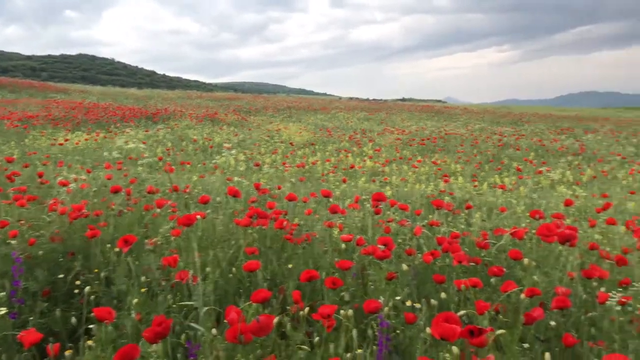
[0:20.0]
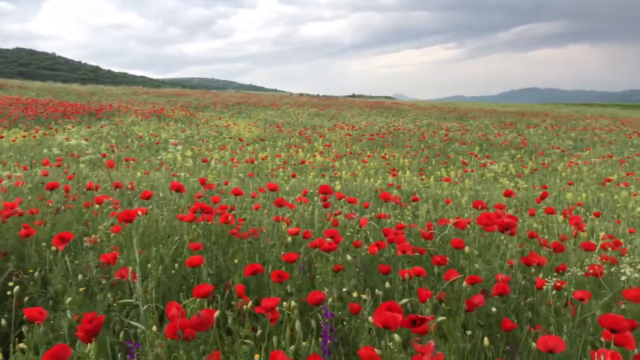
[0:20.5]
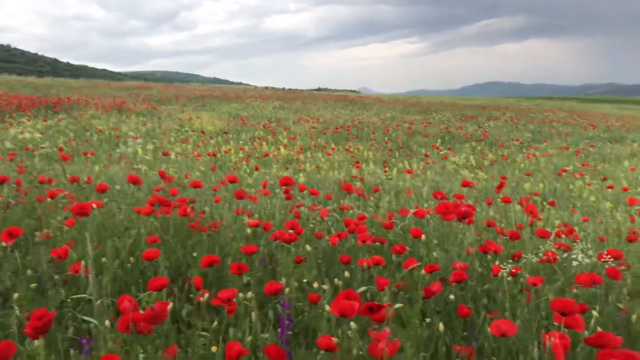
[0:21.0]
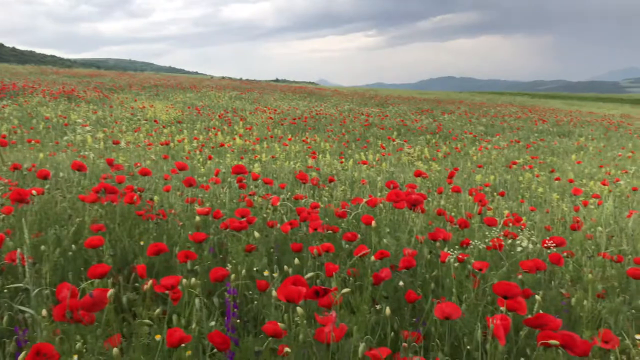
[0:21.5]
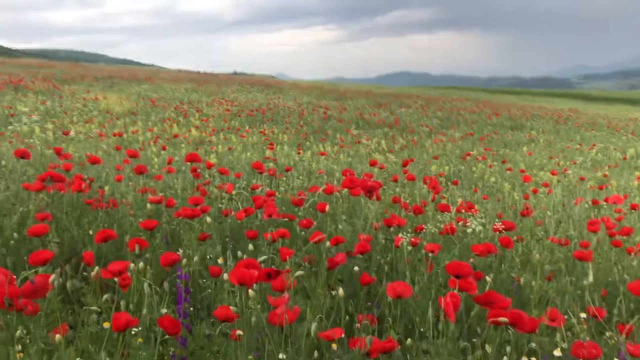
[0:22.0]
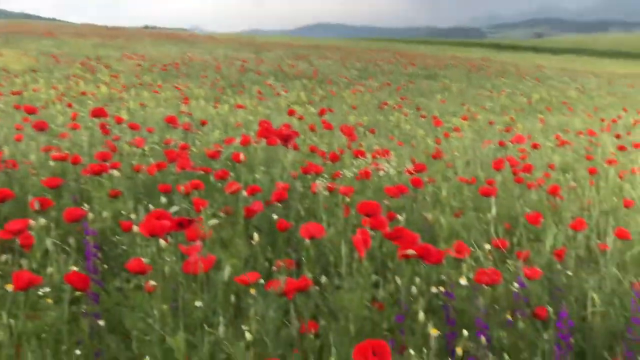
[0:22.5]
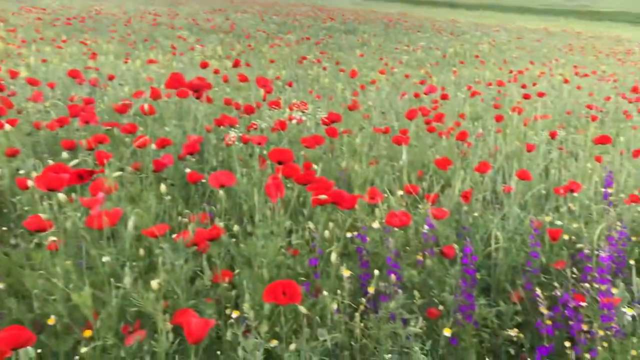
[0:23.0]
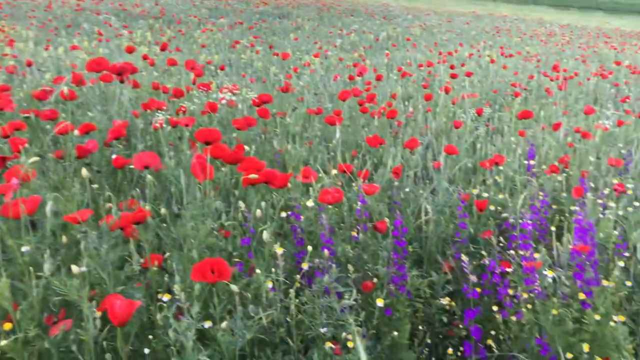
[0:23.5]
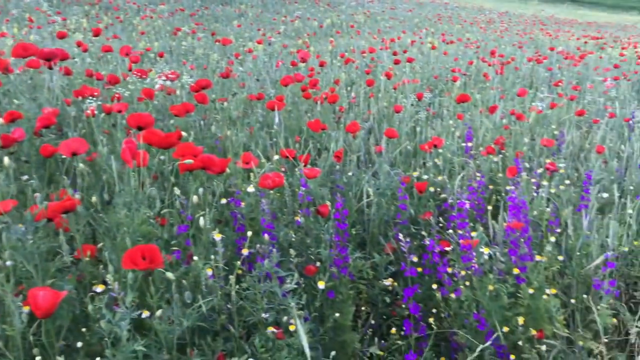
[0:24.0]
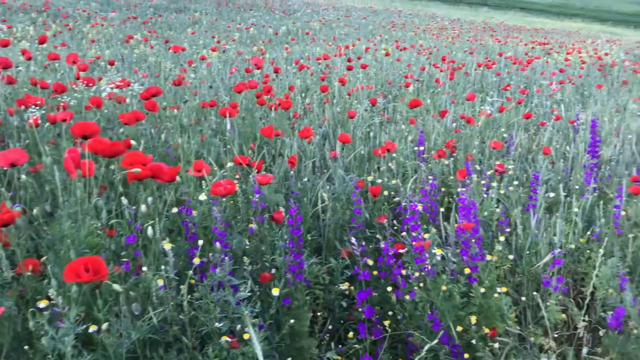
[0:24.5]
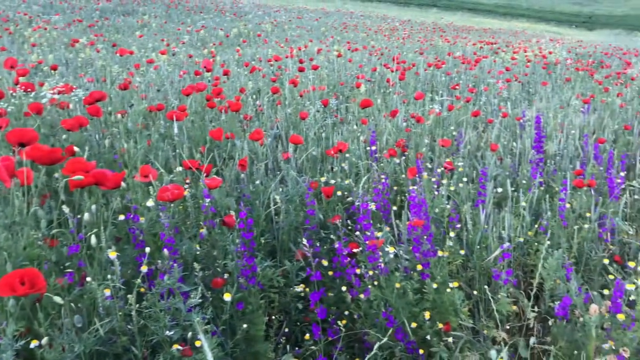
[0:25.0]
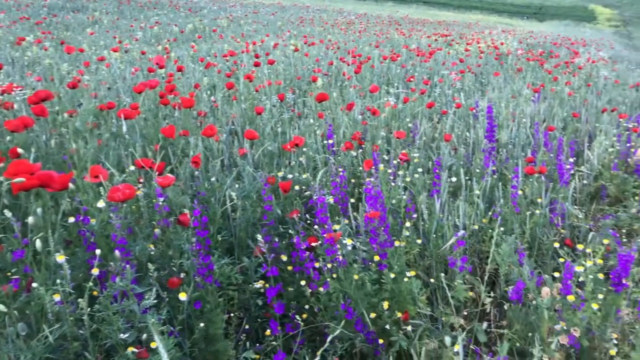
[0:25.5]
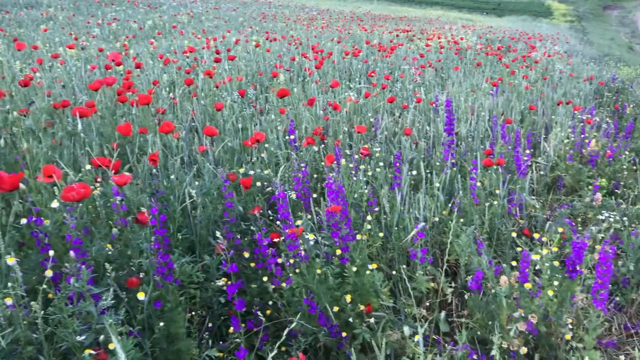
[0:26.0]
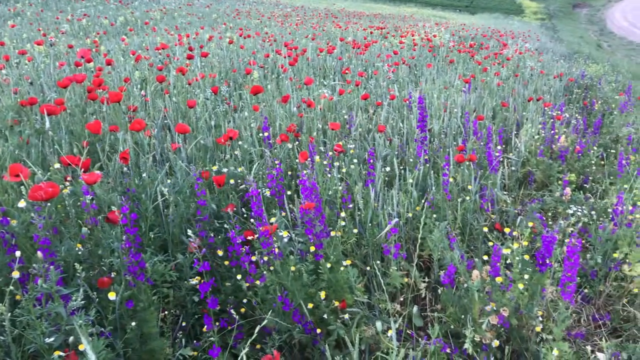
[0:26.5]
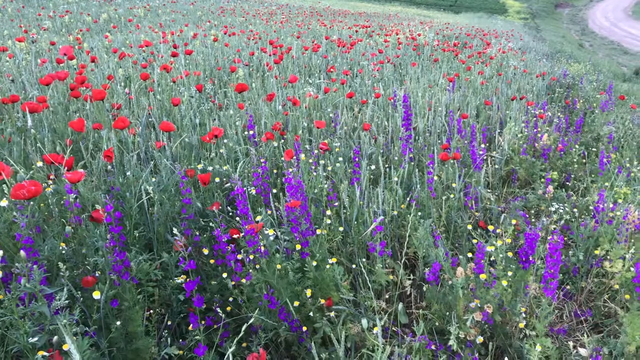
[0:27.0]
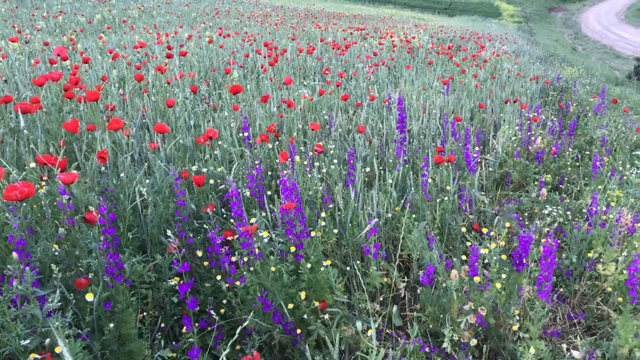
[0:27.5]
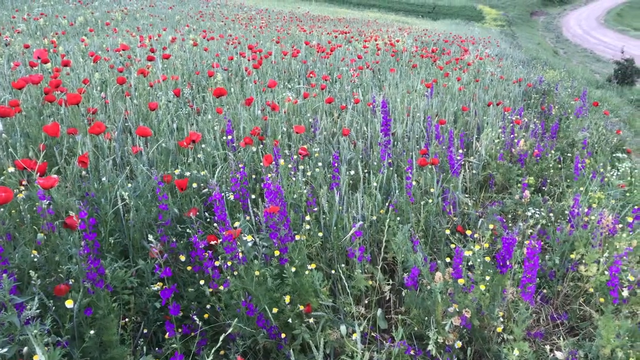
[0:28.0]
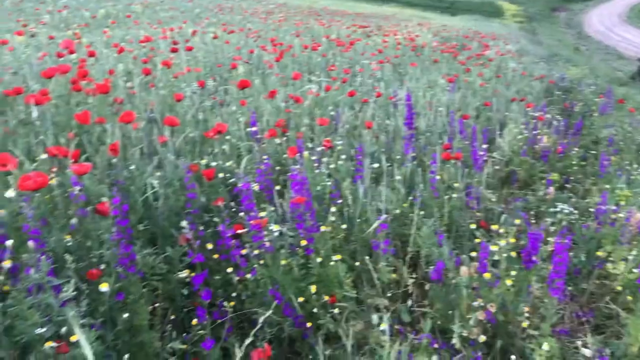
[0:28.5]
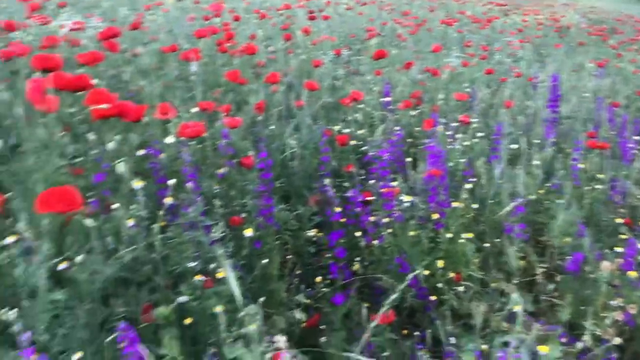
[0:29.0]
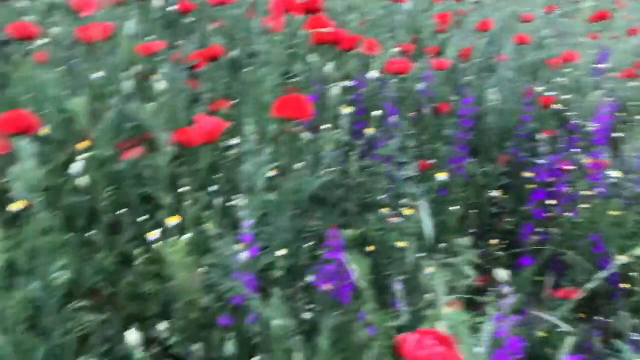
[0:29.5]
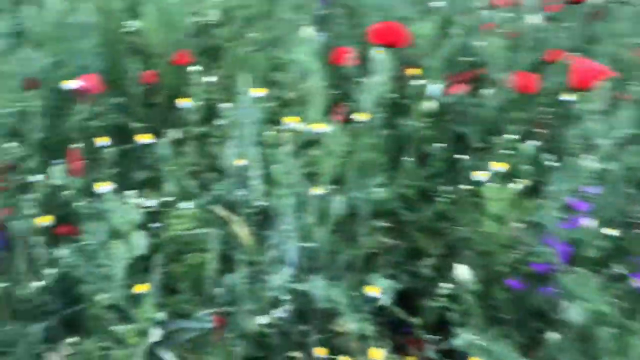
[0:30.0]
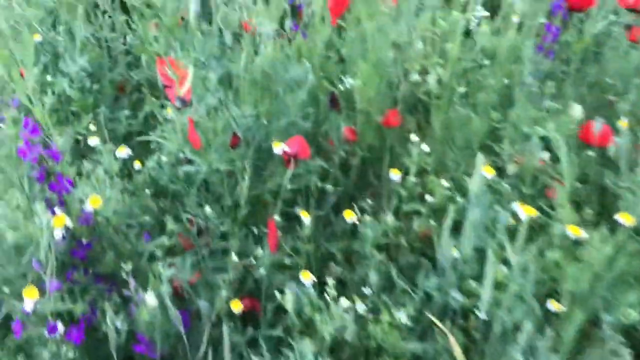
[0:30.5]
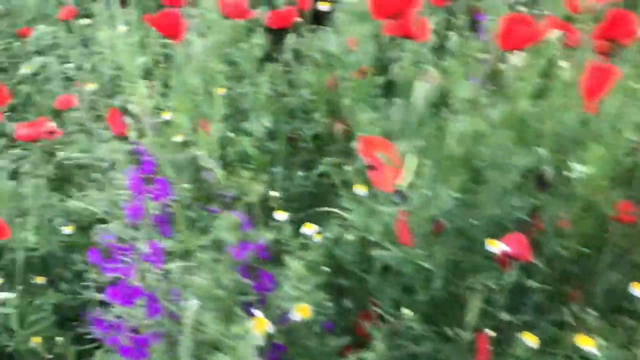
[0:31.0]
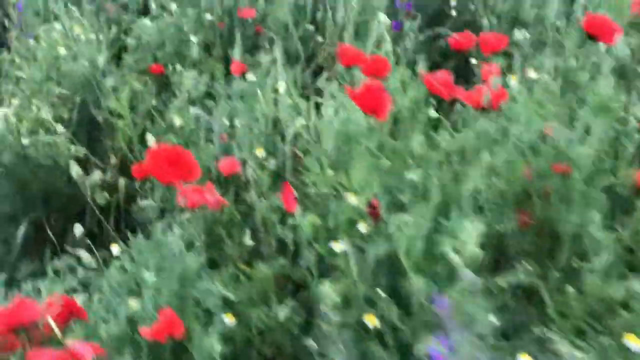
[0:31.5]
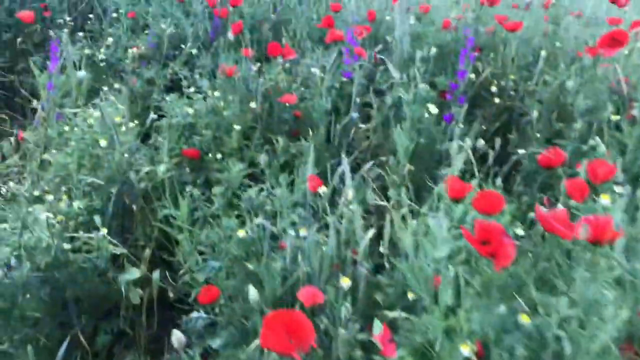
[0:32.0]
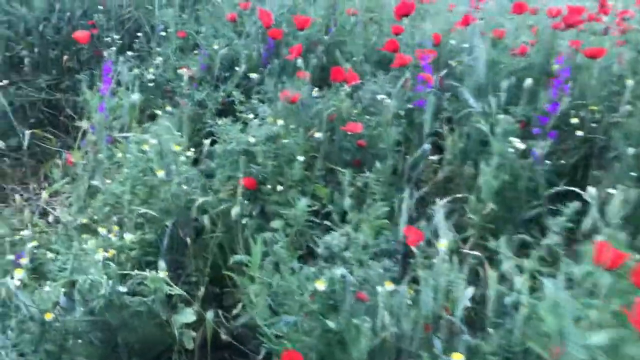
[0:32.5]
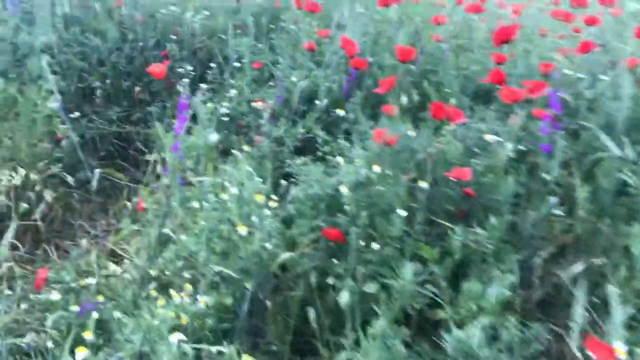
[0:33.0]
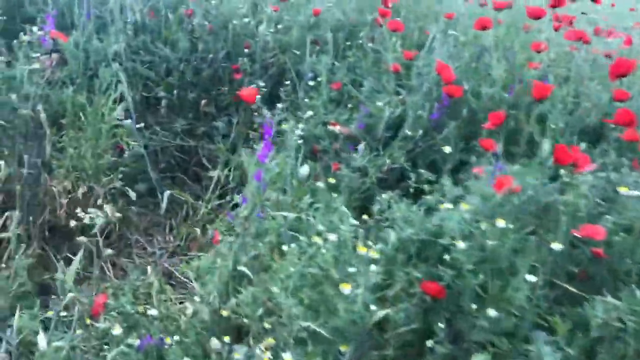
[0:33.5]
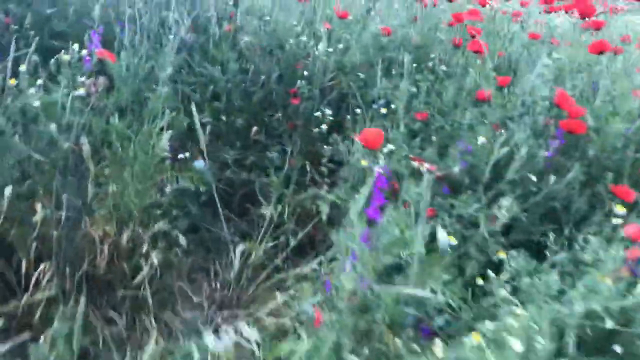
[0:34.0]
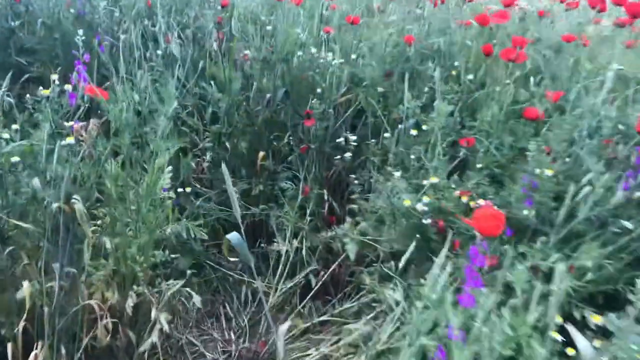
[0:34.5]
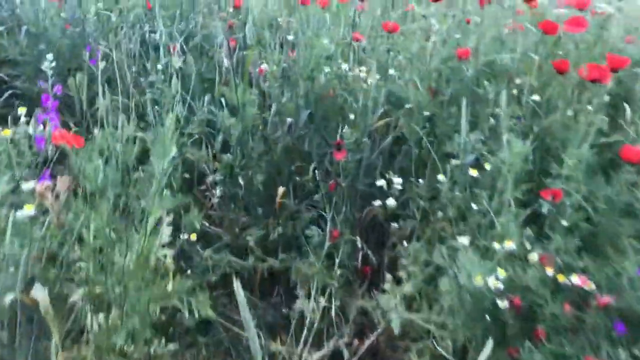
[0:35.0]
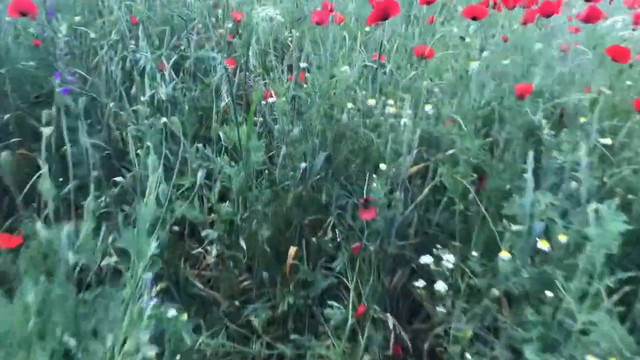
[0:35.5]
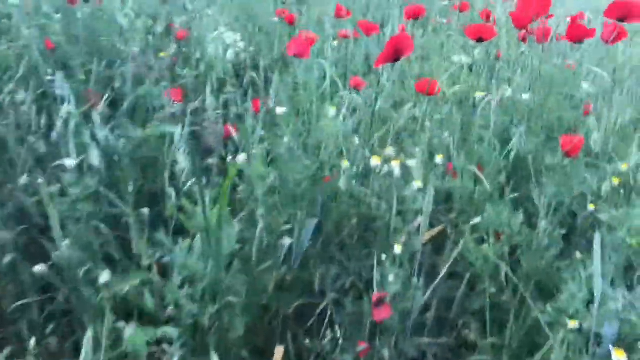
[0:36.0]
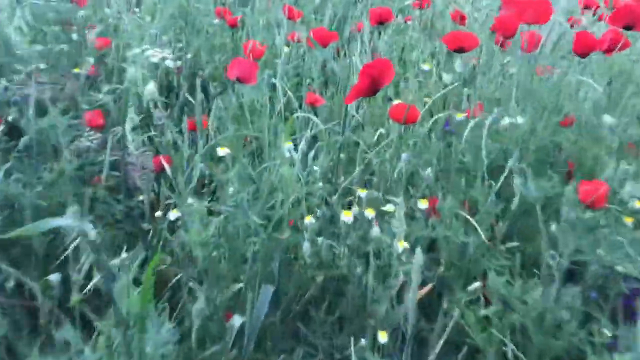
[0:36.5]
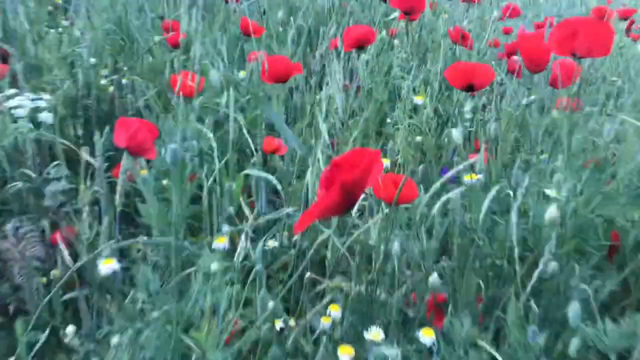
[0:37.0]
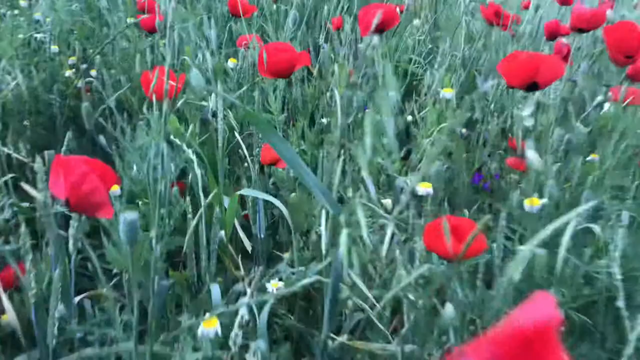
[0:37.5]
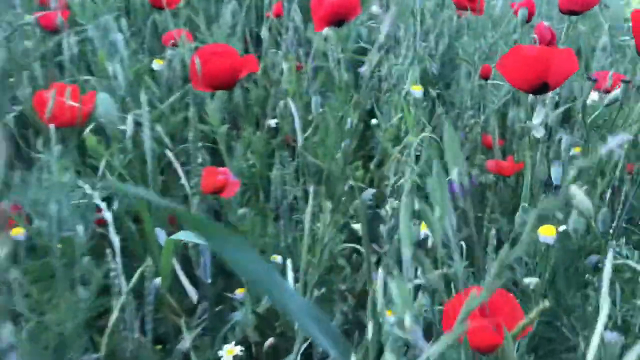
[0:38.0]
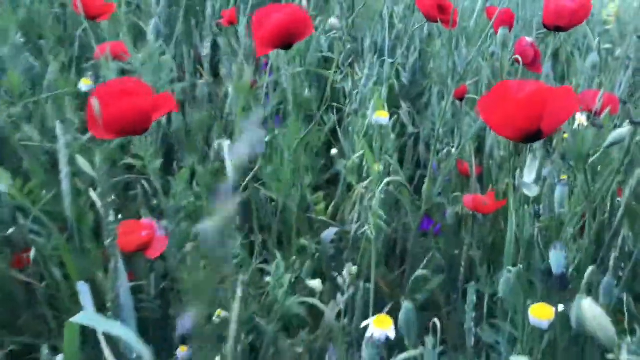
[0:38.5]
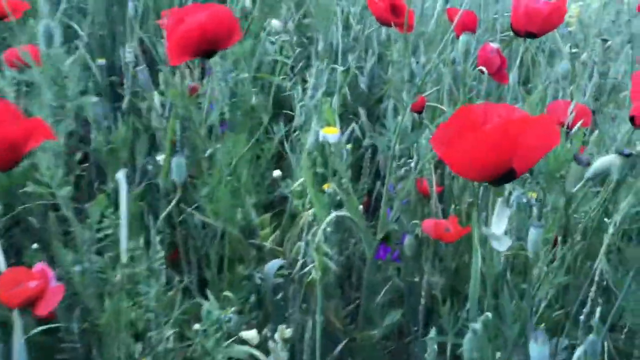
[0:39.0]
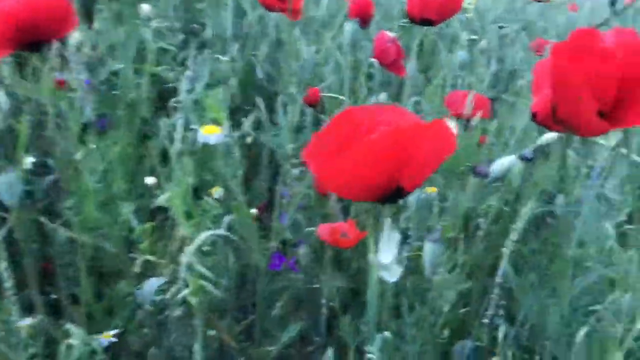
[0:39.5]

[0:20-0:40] The seemingly endless field of poppies continues, with some purple flowers at the start of the shot and tiny white flowers mixed in. The camera pans to the right and down, revealing quite a few more purple flowers mixed in with the red poppies. The camera points straight down, as if the person is walking through the field. The grass around the poppies is quite long, probably reaching the person's waist or higher. The white flowers have some yellow on them and almost look like buttercups, though this is uncertain. The purple flowers have a cone or conical shape and look somewhat like lupins, though they apparently are not.